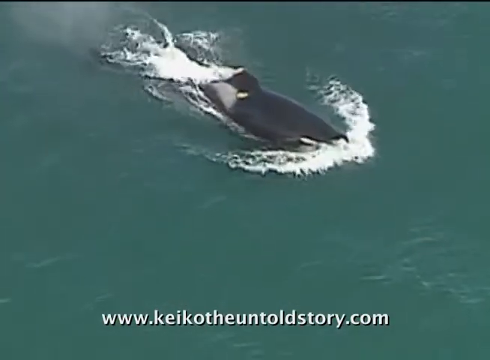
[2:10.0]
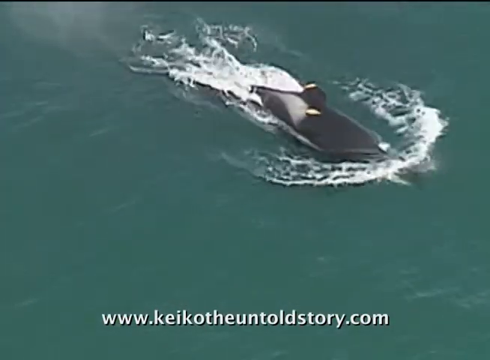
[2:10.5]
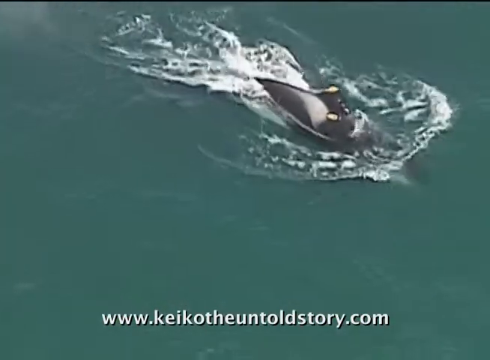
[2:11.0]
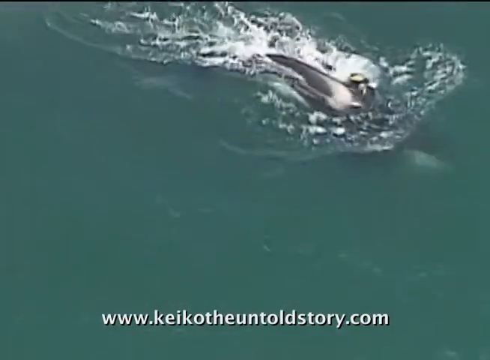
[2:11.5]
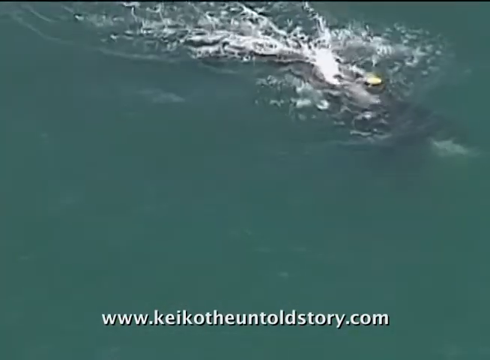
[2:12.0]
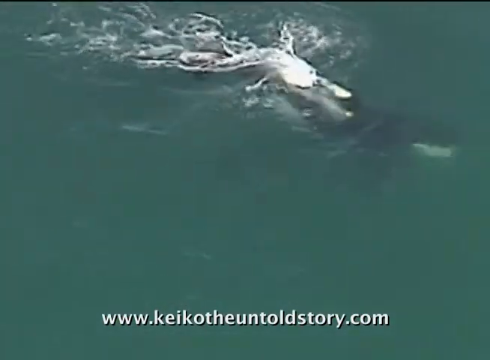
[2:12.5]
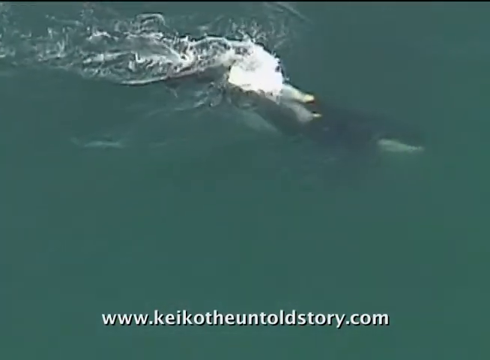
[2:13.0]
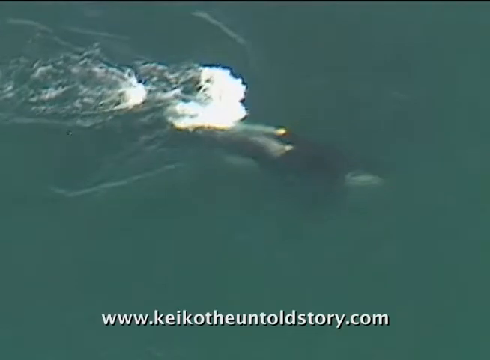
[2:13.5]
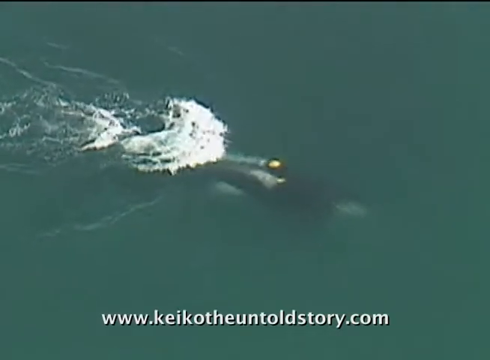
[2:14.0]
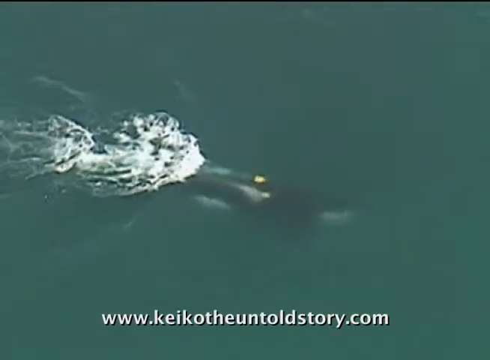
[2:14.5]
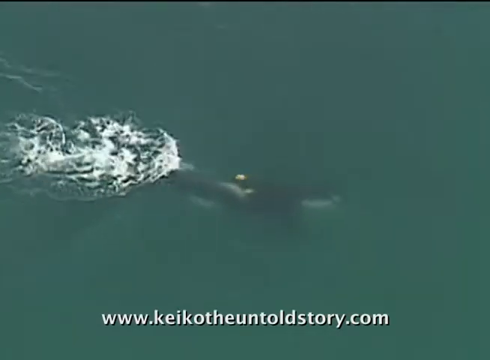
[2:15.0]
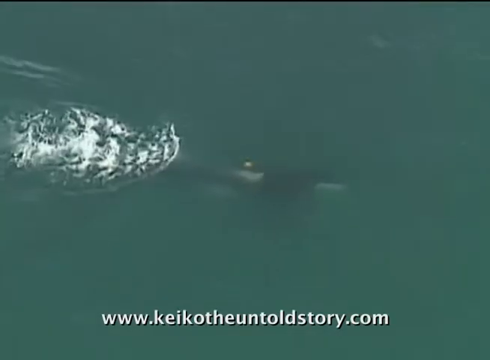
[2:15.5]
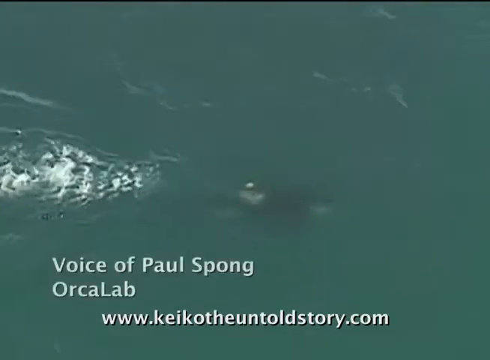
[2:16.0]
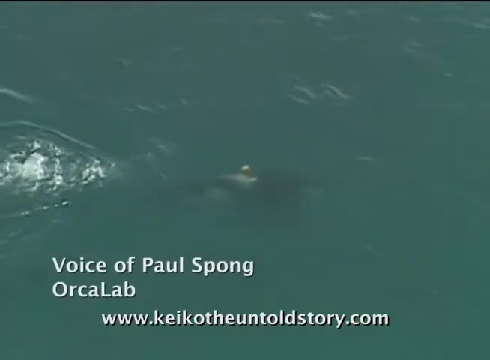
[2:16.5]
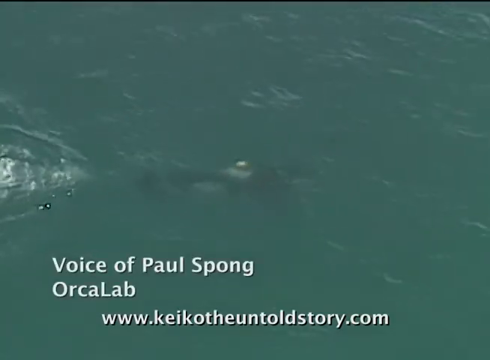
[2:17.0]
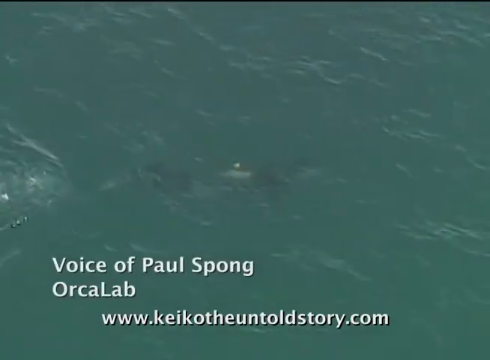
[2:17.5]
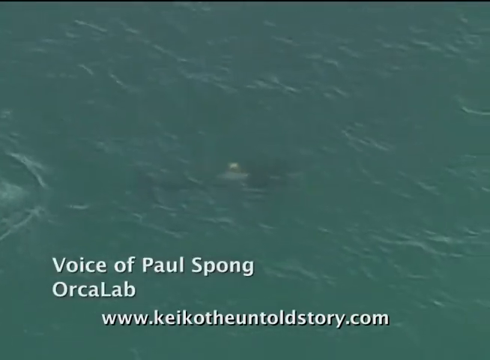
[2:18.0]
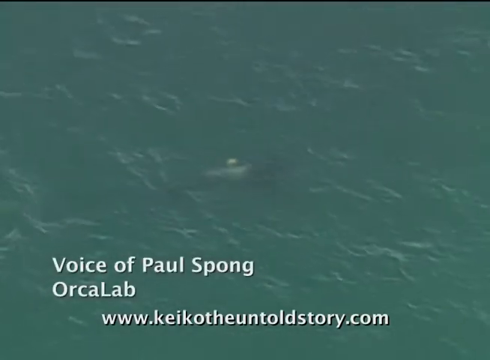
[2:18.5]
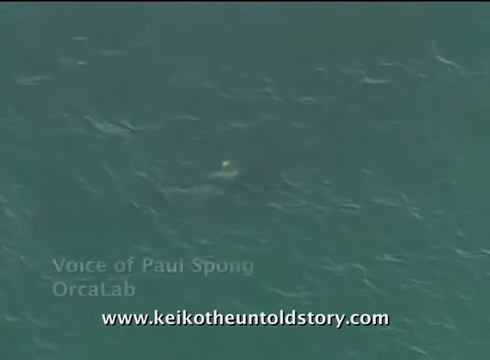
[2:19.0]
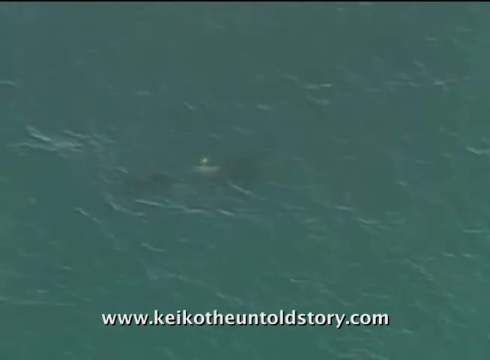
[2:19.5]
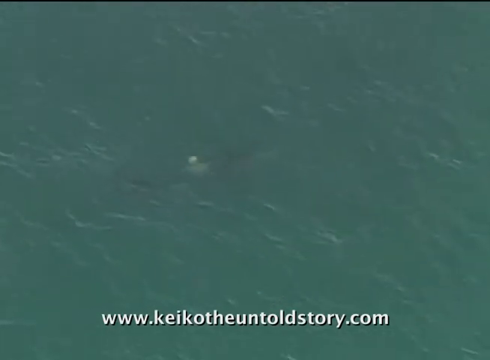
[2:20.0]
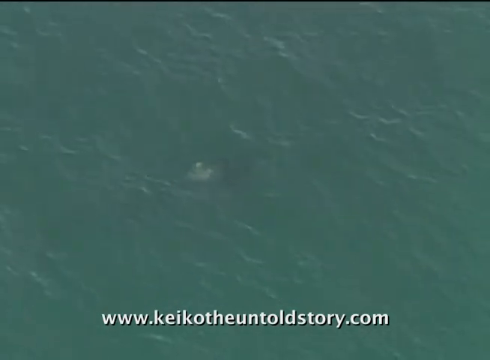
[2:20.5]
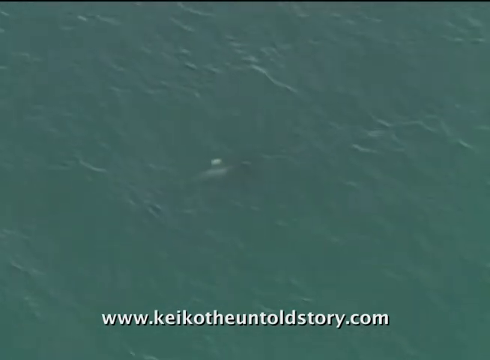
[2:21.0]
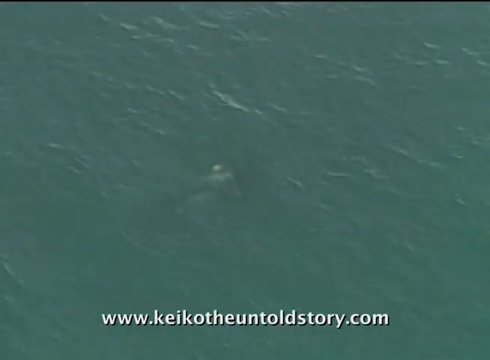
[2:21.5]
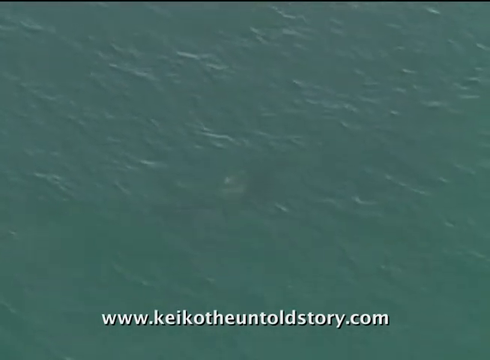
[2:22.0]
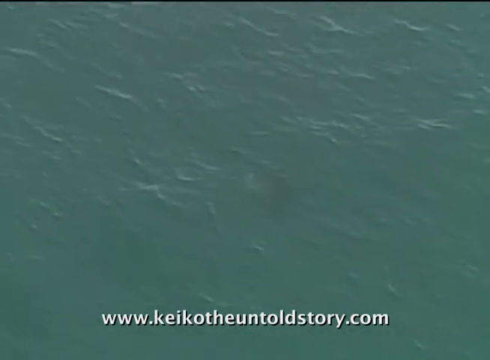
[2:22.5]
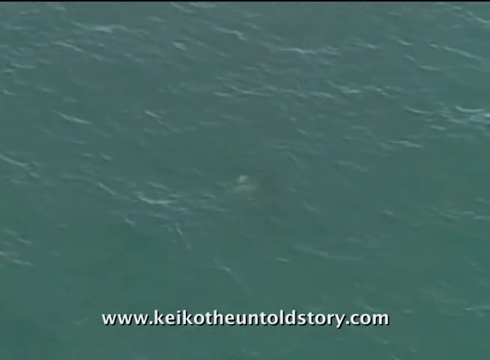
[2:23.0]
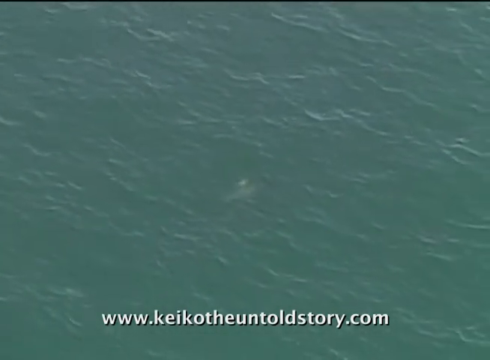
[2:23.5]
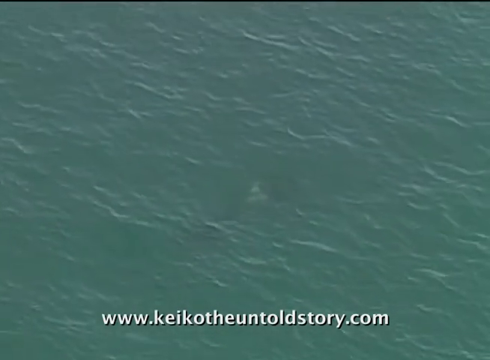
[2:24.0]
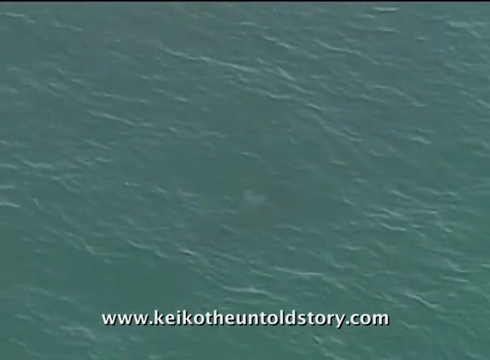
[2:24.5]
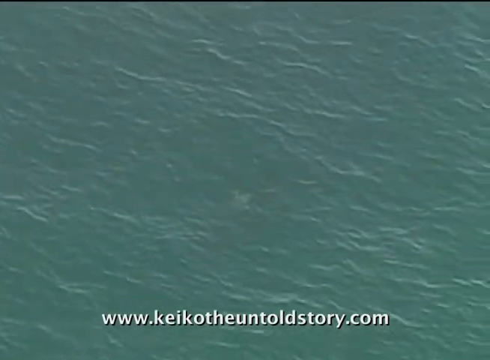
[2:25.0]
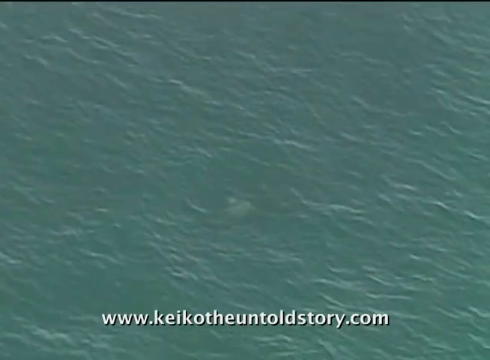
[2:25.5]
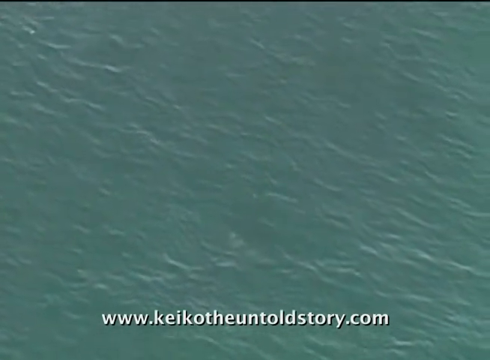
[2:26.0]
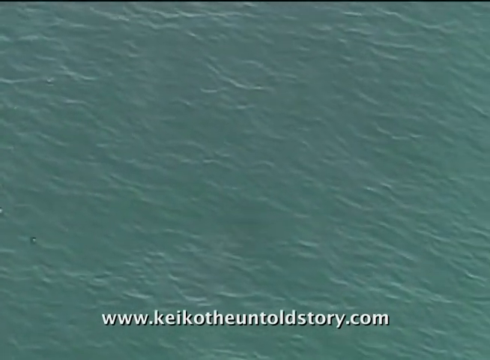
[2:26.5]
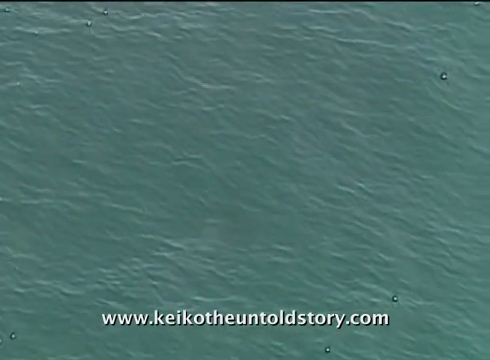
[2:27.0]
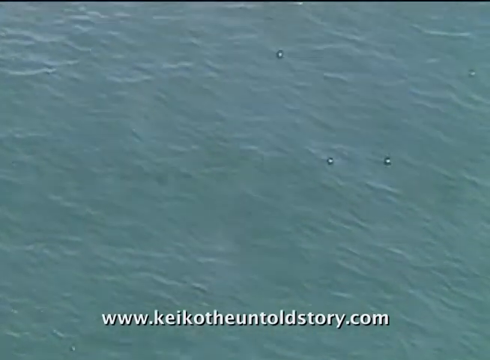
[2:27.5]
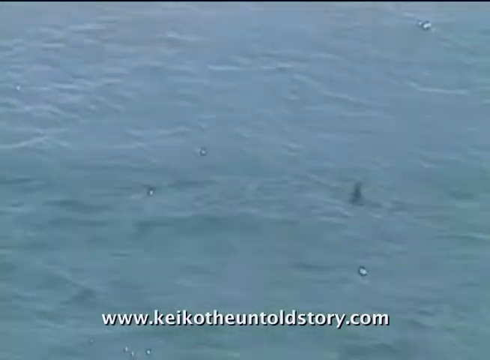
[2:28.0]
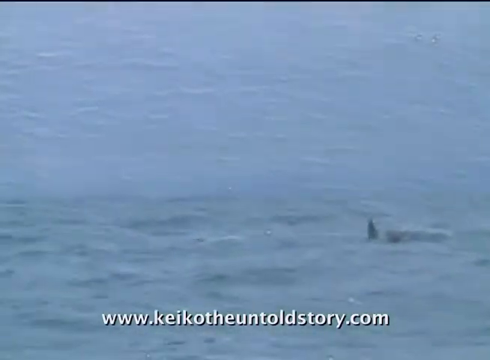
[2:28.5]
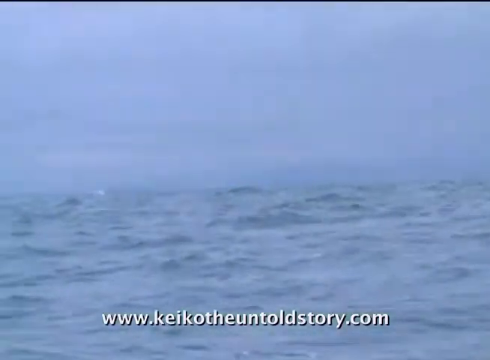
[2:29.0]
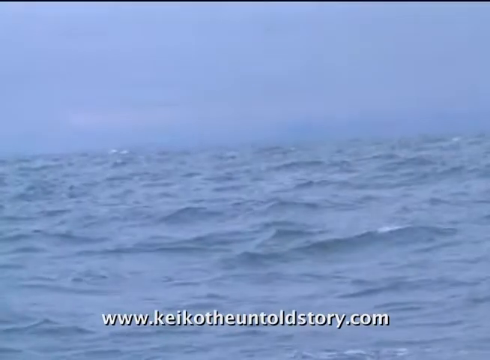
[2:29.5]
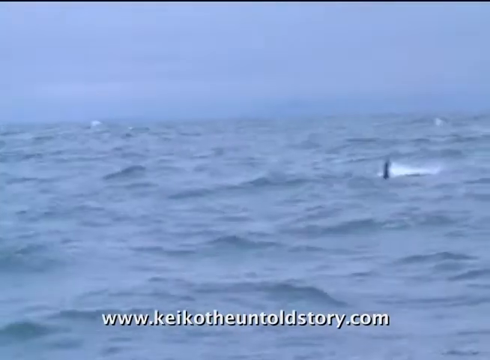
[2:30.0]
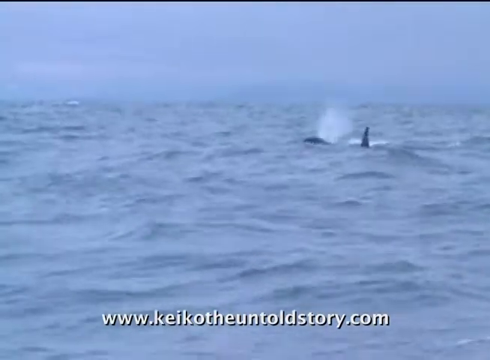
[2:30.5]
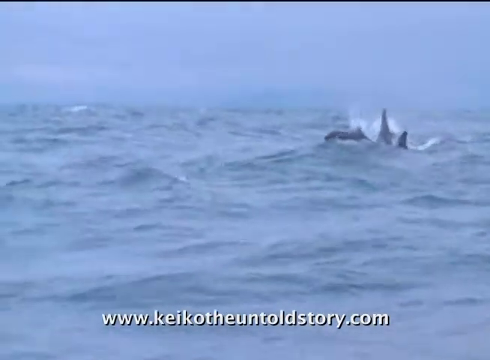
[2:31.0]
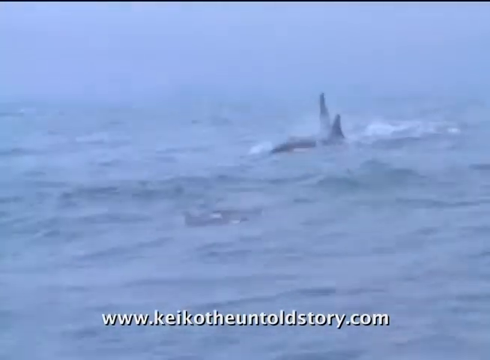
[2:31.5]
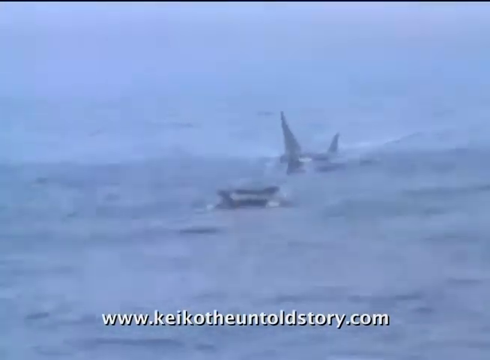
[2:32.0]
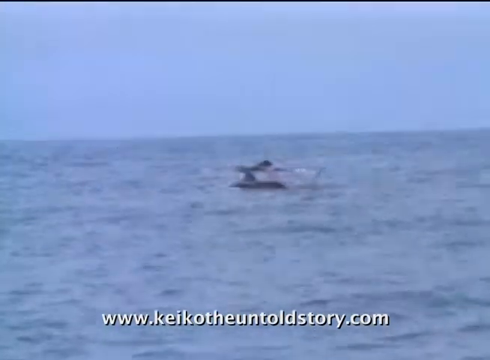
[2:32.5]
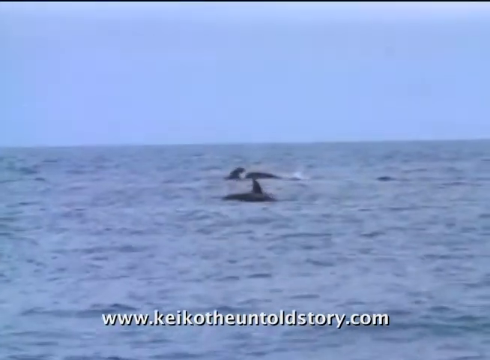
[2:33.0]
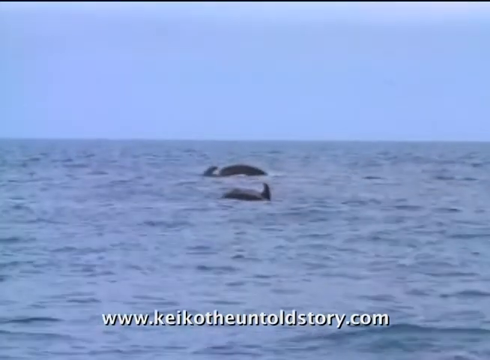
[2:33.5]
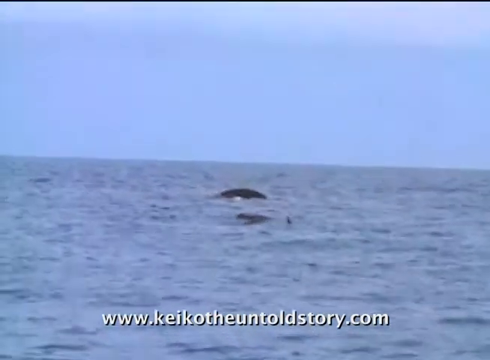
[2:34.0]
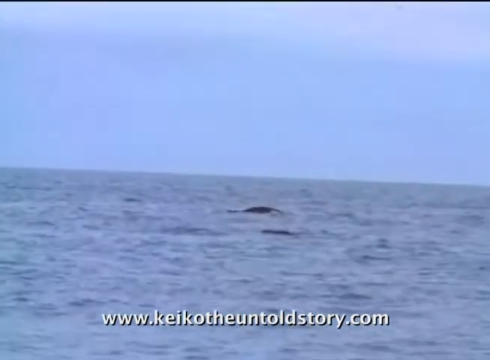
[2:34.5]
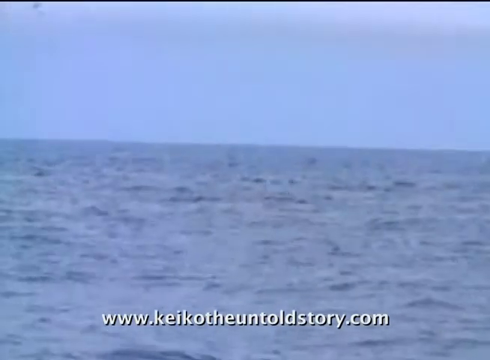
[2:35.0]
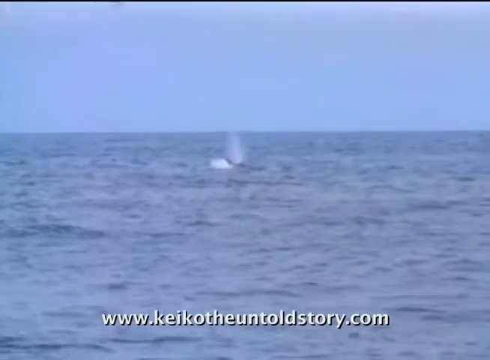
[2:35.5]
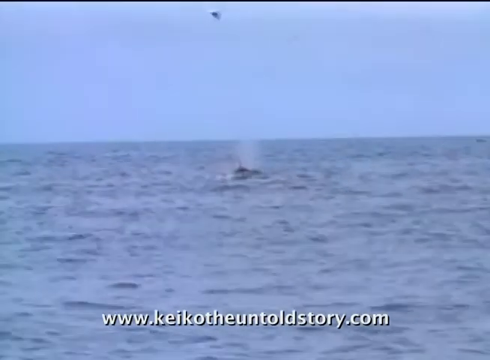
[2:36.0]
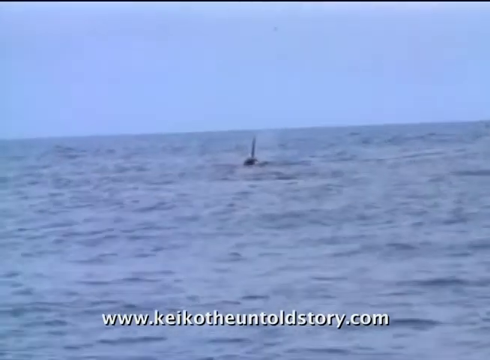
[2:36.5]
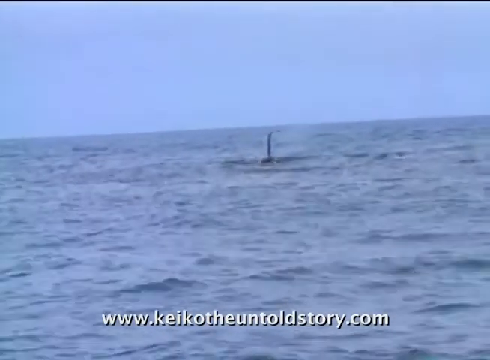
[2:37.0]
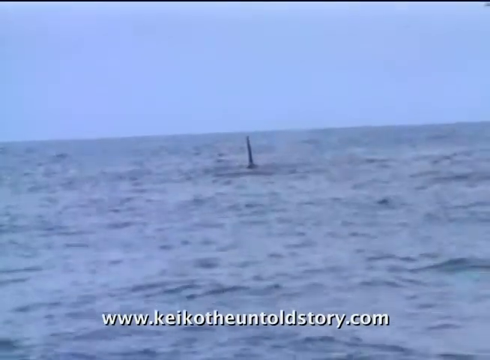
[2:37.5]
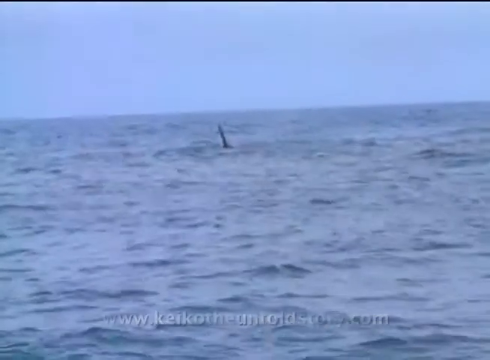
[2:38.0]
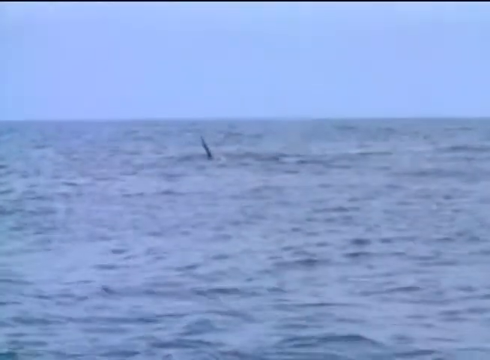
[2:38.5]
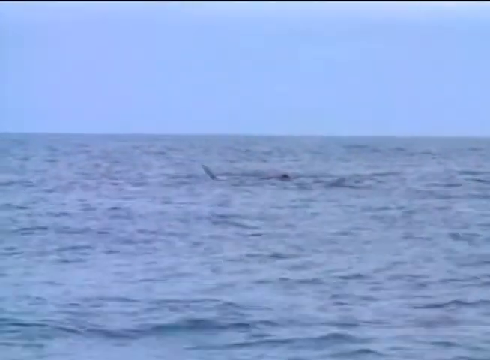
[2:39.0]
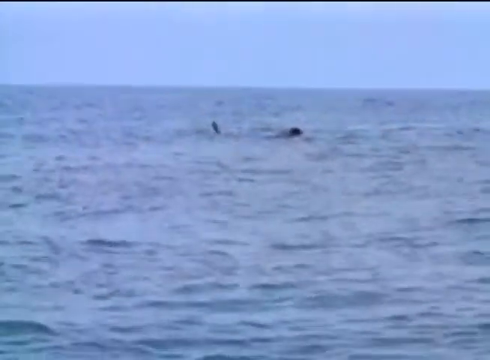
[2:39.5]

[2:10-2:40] The orca swims in green, cloudy water, breaking the surface and going under, creating white froth, then swimming under the water. White lettering at the bottom reads "Voice of Paul Spong, Orca Lab, www.keikotheuntoldstory.com." The shot follows the orca as it continues swimming under the cloudy green water, slowly disappearing until only the faint outline of its black and white pattern is visible. The shot switches to the open ocean with rough seas, where two orcas swim and break the surface, their long dorsal fins coming out of the water. A farther-away shot shows a gray-blue sky and gray-looking water, with the two orcas breaking the water and going under the surface, splashing and spitting air from their blowholes. The long dorsal fin of one orca is visible. White lettering at the bottom reads "www.keikotheuntoldstory.com."